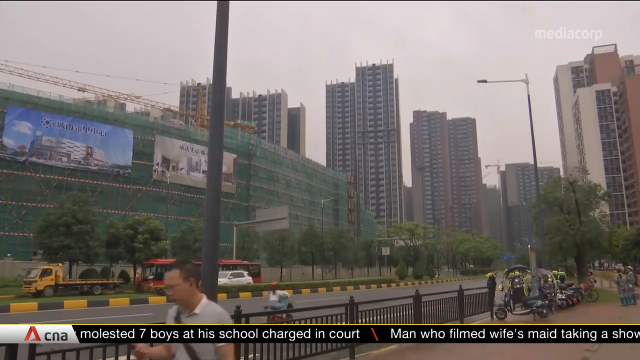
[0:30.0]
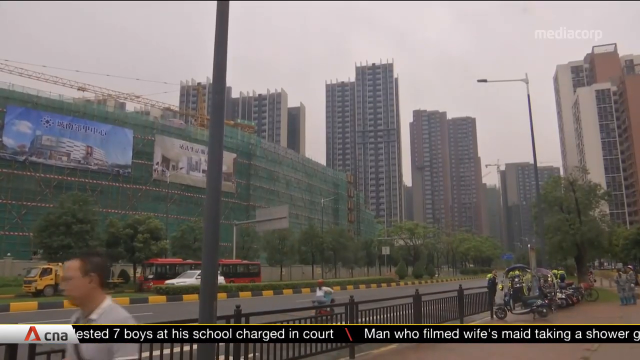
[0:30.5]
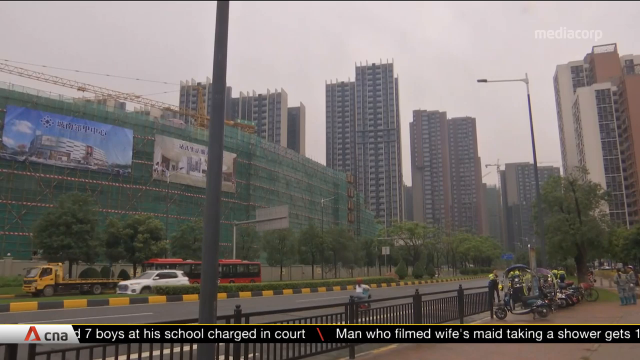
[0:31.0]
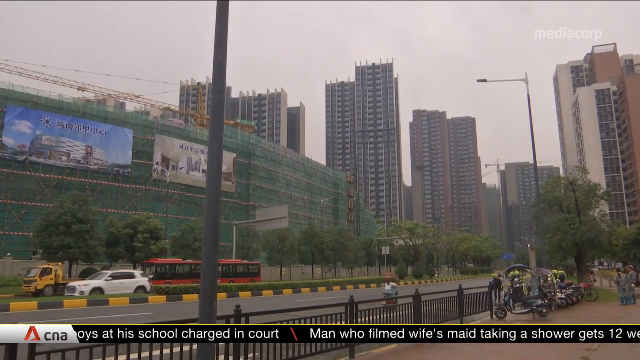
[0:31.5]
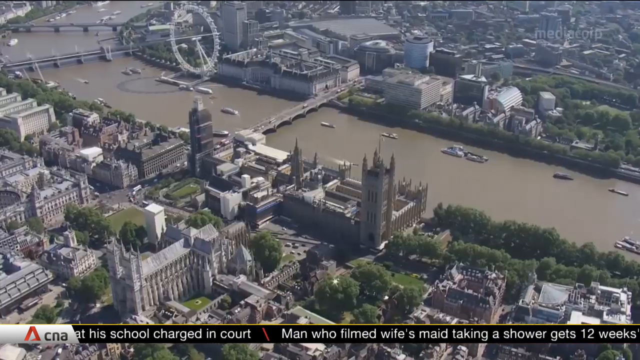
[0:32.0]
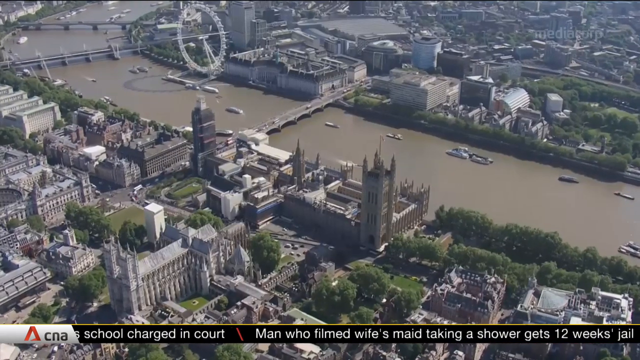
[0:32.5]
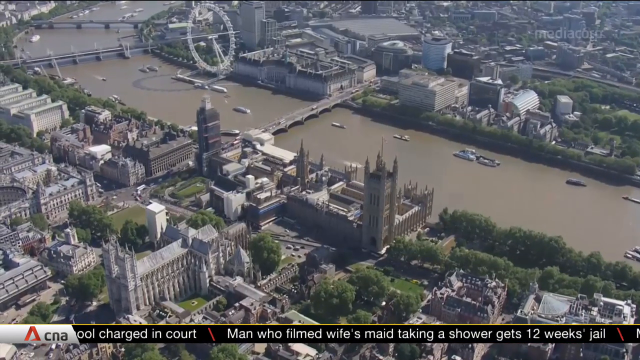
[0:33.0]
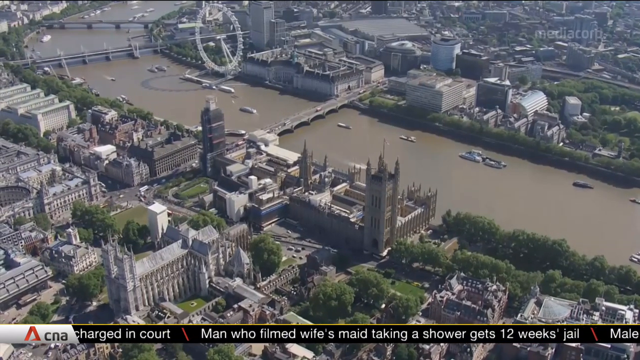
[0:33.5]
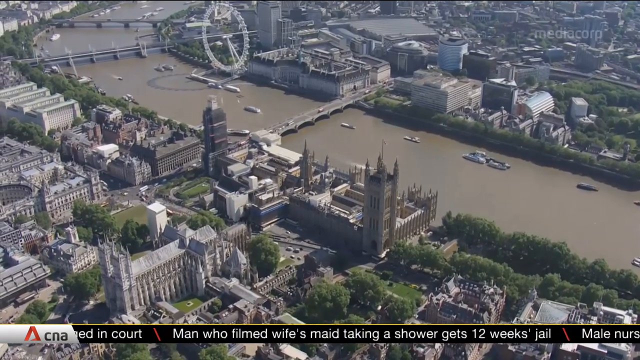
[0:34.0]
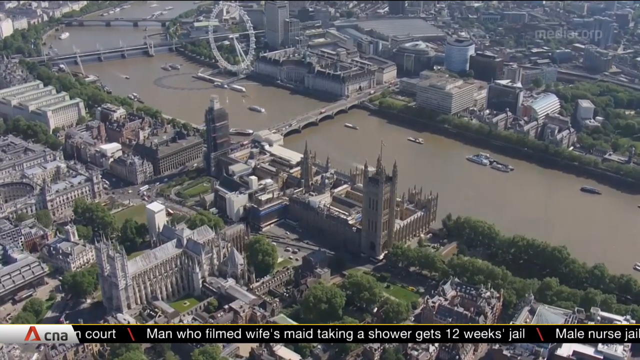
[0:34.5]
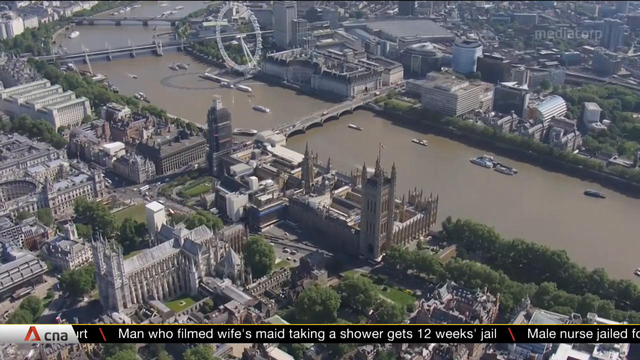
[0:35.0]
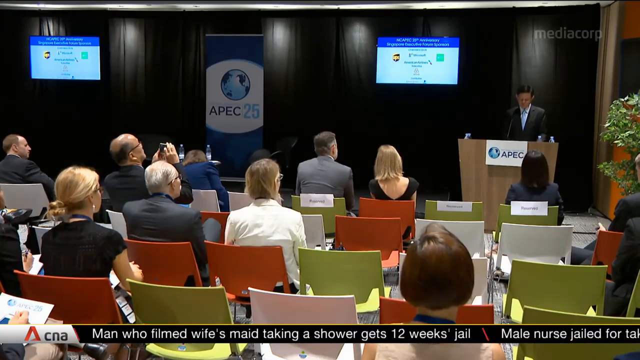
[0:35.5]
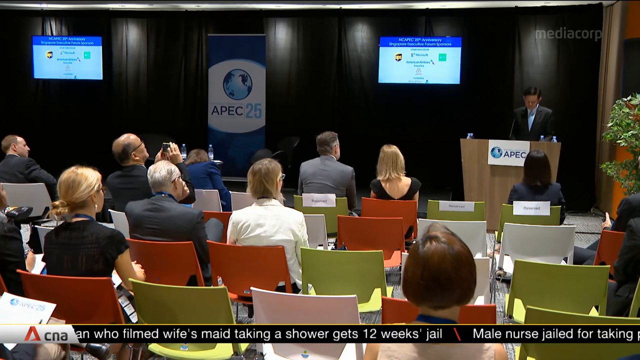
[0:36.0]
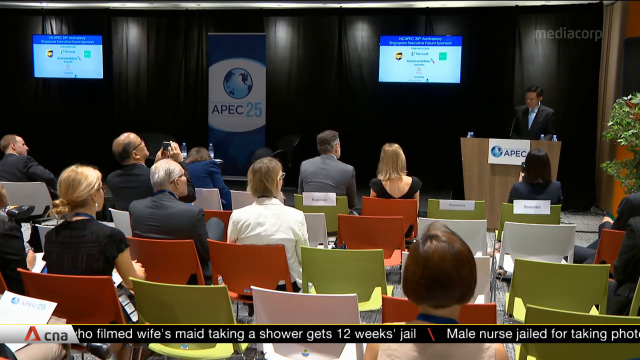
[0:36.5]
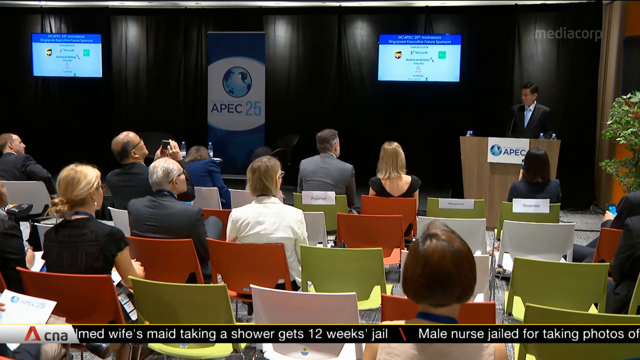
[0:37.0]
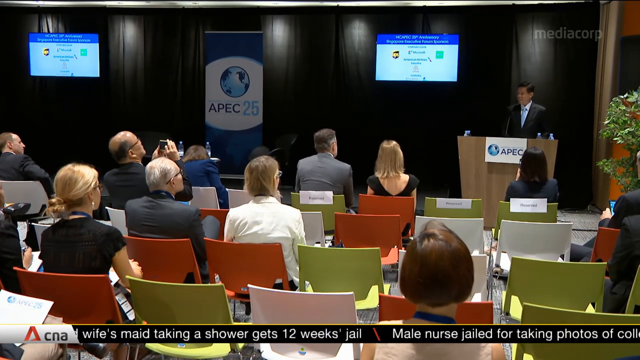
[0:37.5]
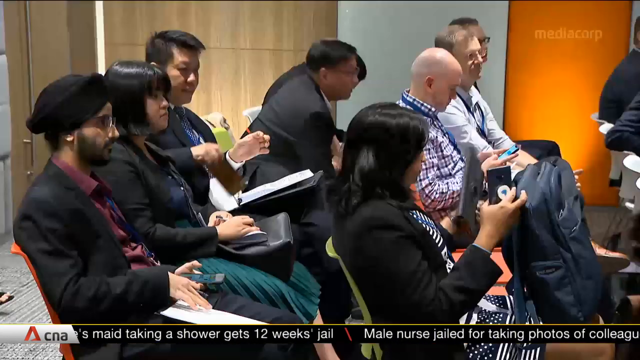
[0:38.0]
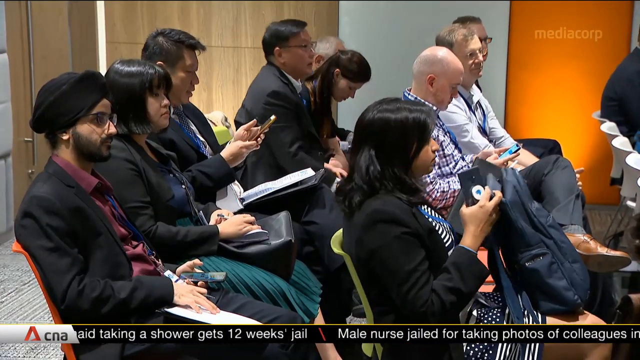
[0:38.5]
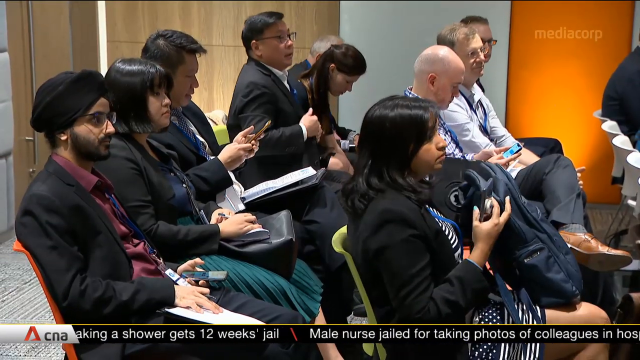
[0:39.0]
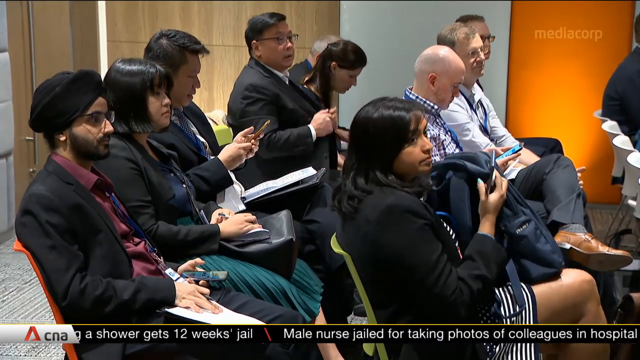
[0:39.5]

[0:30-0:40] The video cuts to another, unidentified cityscape with lots of skyscrapers, a busy road and some construction work. Then comes a helicopter or drone shot of London, probably filmed from a helicopter as it seems very high up. The River Thames curves from the bottom right to the top left of the screen, and the London Eye and several bridges are visible. The shot is taken from close to the Houses of Parliament. The Thames looks brown, but it is a sunny day. Next is a press conference, with what appear to be rows of journalists looking towards a man at a wooden podium. The event is branded "APEC 25", with a sign on the podium and a sign on the wall, and there are two television screens on the wall whose text is not legible because the image is quite low resolution. A close-up follows of journalists all holding their phones and notepads and listening.